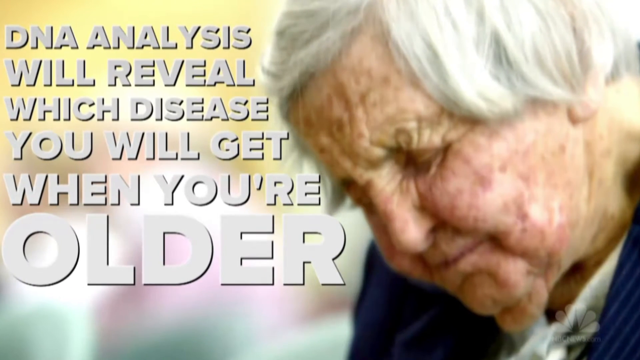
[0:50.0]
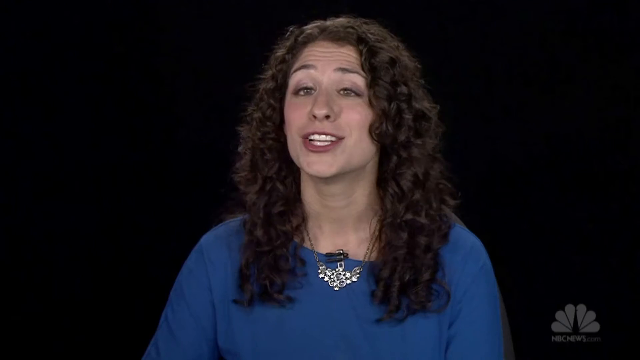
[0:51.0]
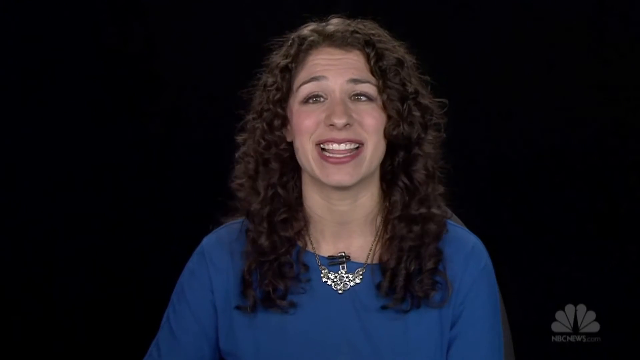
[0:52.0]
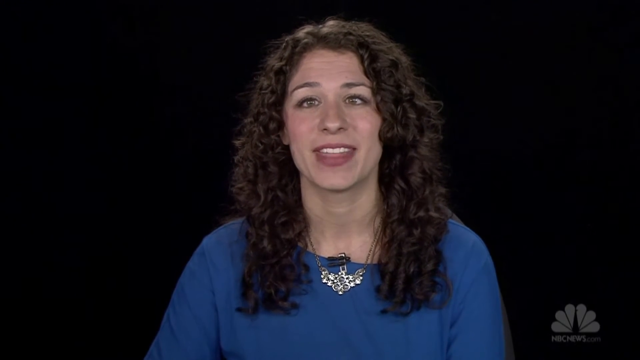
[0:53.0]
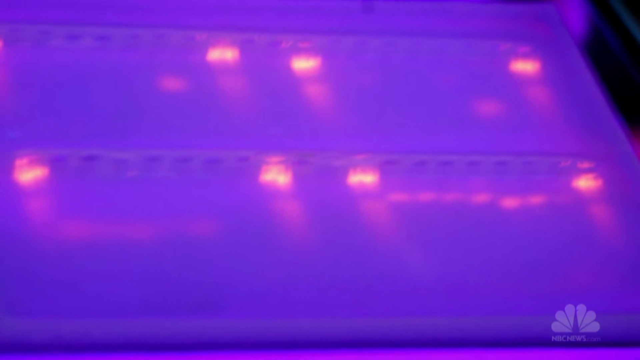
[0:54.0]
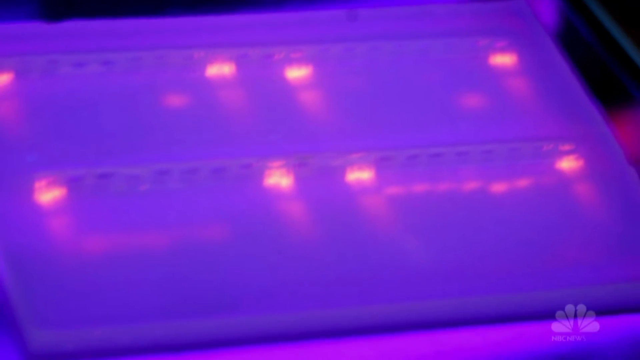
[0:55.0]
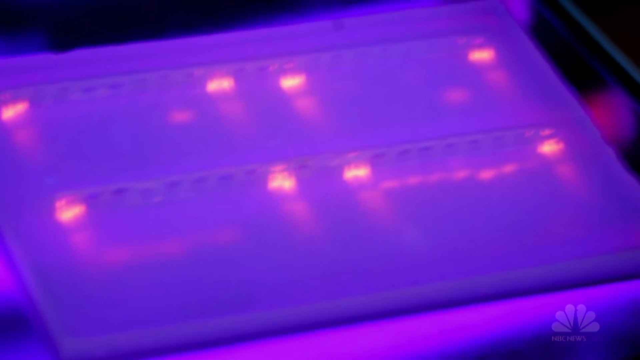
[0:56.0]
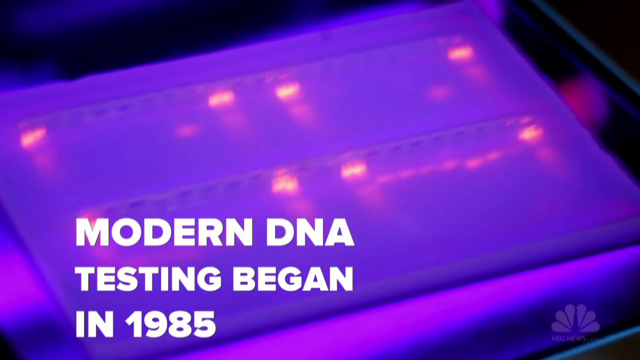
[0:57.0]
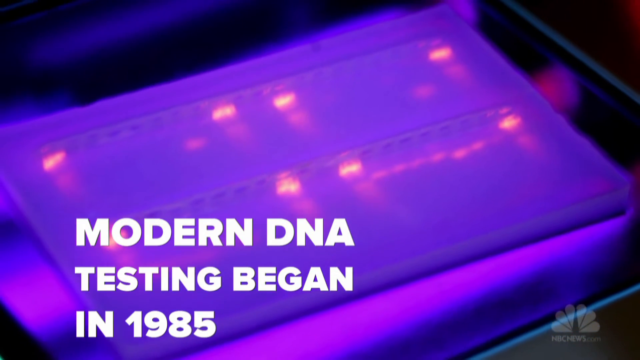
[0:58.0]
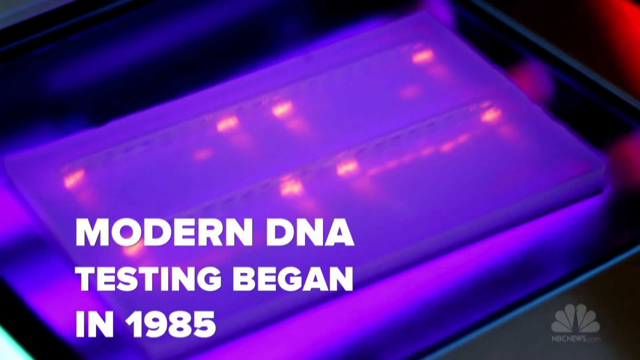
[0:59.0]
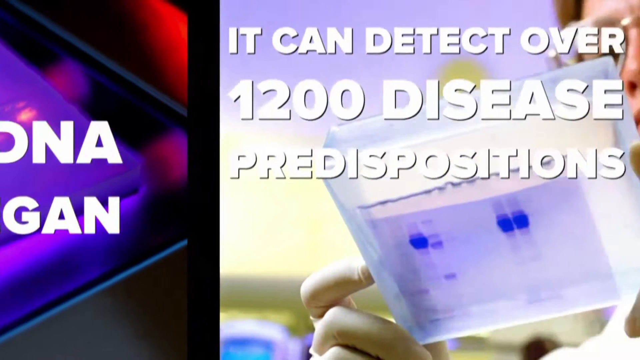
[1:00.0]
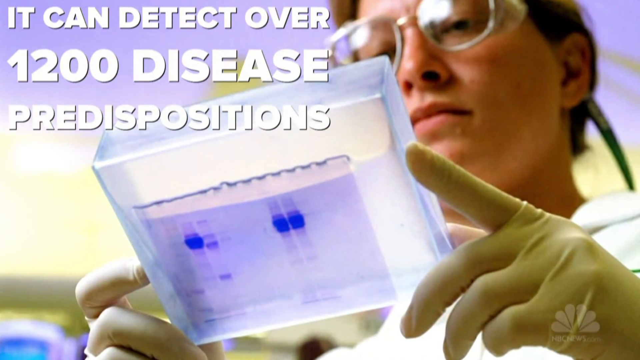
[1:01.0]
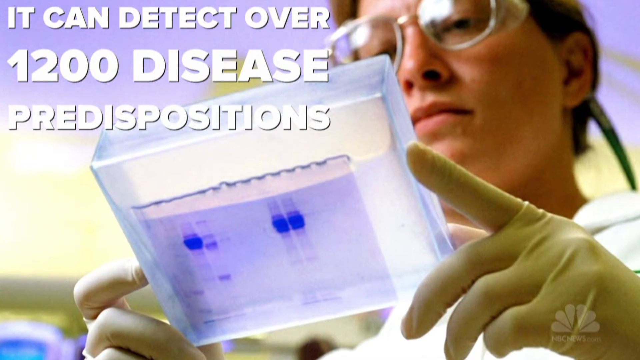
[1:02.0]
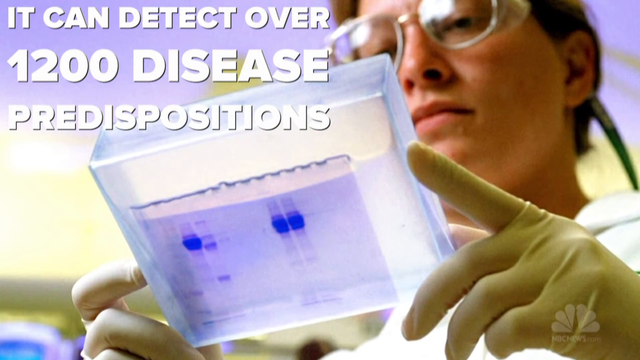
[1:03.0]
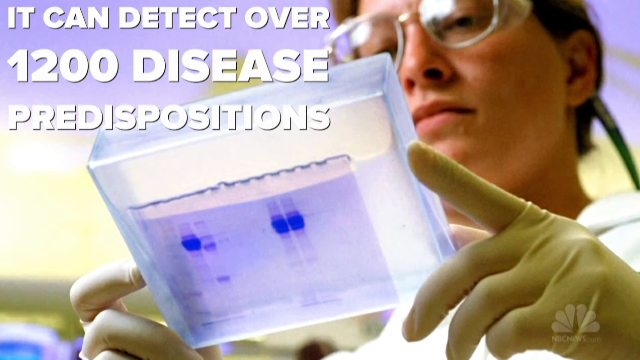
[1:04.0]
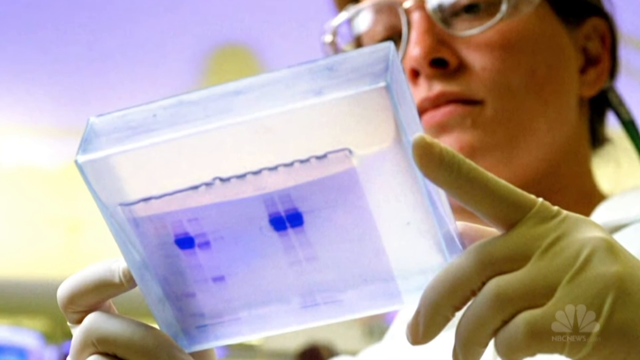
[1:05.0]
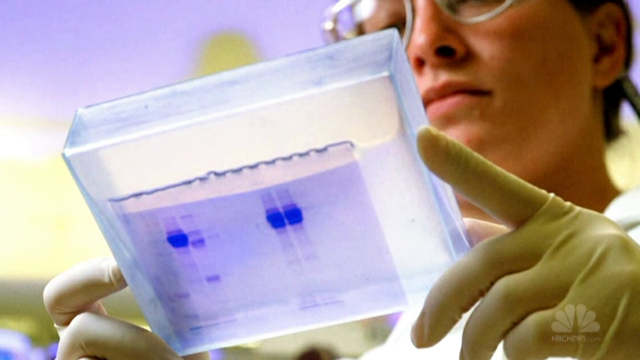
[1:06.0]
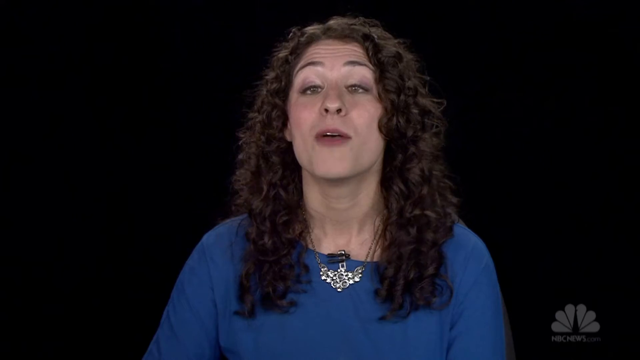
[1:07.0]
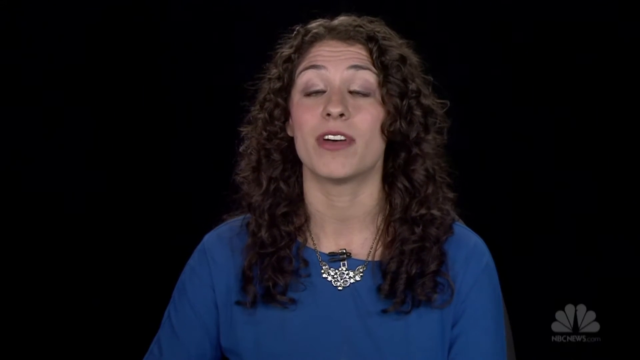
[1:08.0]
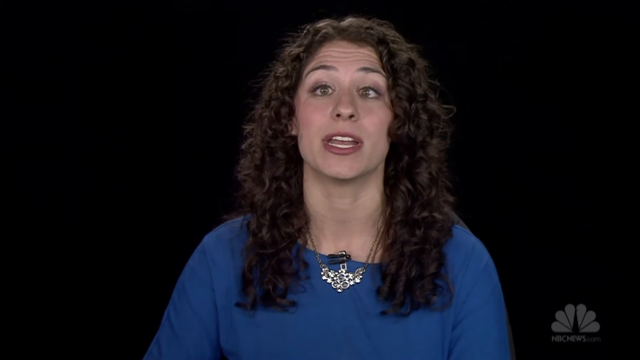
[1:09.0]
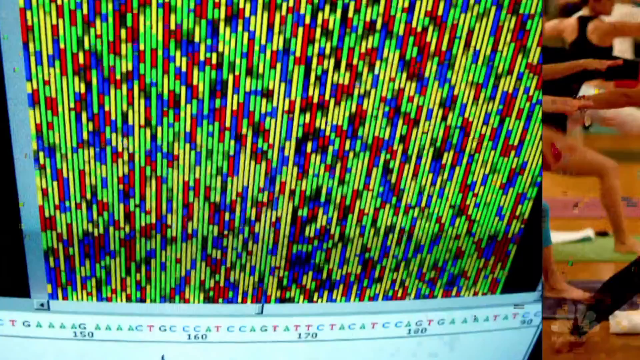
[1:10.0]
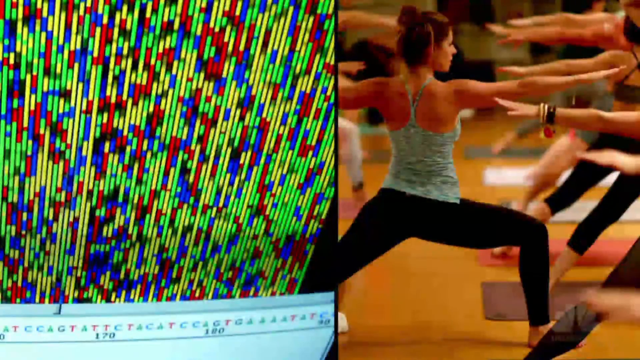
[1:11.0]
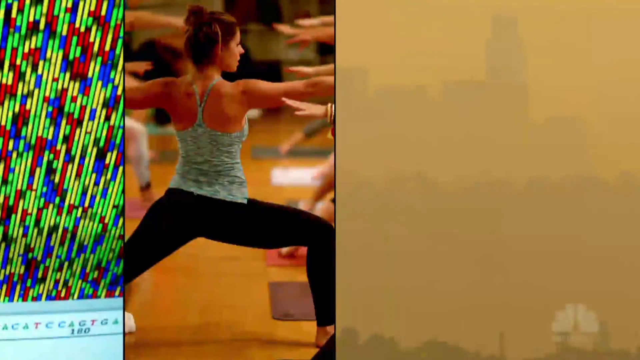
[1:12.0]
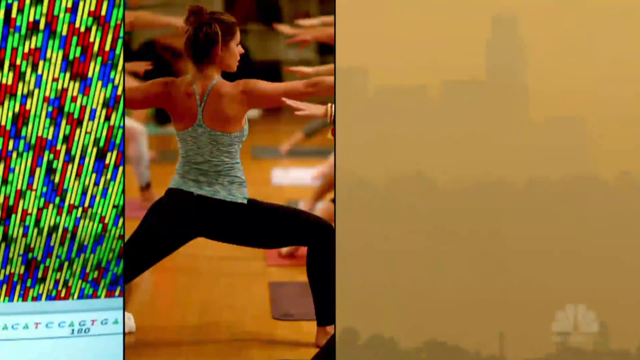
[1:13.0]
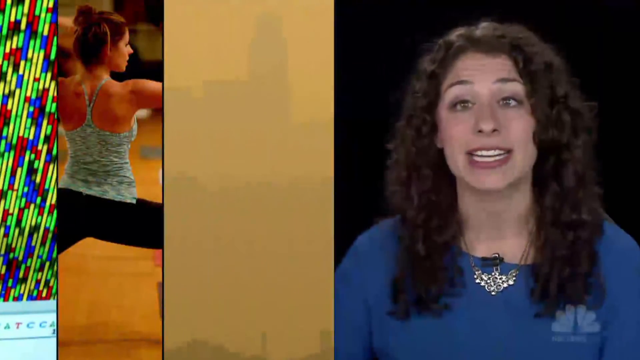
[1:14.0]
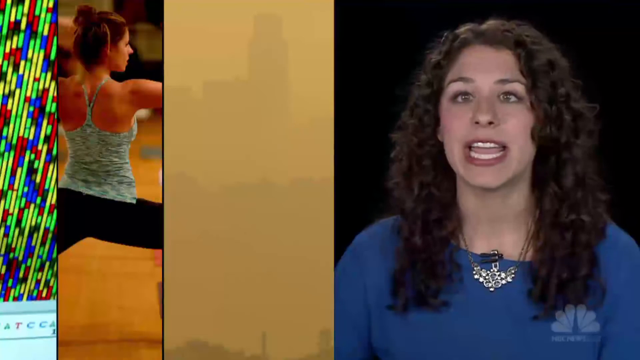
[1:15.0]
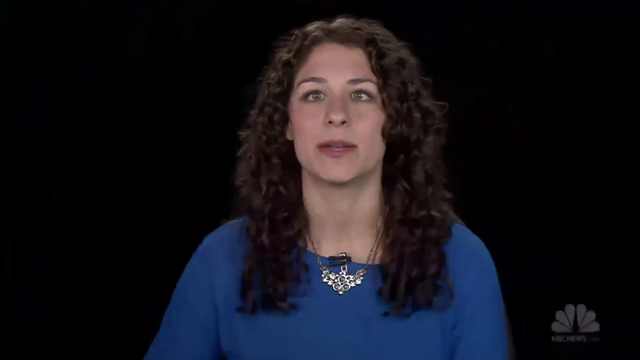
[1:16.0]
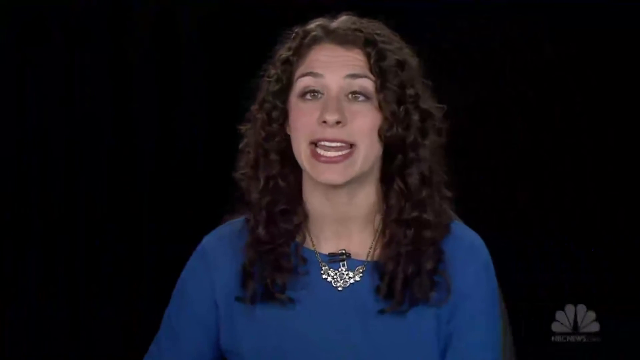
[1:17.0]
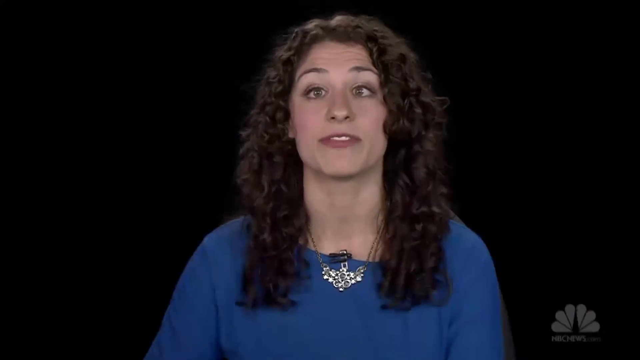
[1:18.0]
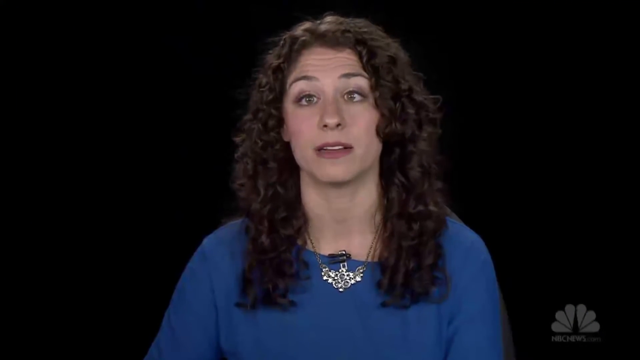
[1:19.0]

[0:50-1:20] On the right side of the screen is an old lady's head; she has white hair and is squinting her eyes tightly closed. To the left of her face it says "DNA analysis will reveal which disease you will get when you're older". The video cuts to a woman sitting in front of a black wall, wearing a long-sleeved blue shirt and a necklace with a silver charm on the end. She has long black hair, her left eye is crossed and pointing inward, and she speaks directly into the camera. Next is a screen under a black light showing a board with highlighted purple areas, and along the bottom in white it says "modern DNA testing began in 1985". Another screen follows with text starting in the top left-hand corner: "it can detect over 1200 disease predispositions". In the background is a woman wearing glasses, with short brown hair, a white lab coat and yellow rubber gloves, holding a block of something in her hands and looking down at it. The screen then splits into three side by side. The first shows a woman from the back, wearing long black sweats and a green tank top, her hair up in a ponytail, squatting down into an exercise move. The next is a very foggy, smoggy picture in which a building is barely visible through the smog. To the right of that is the woman with the crossed eye, blue shirt and long black hair, speaking directly to the camera.